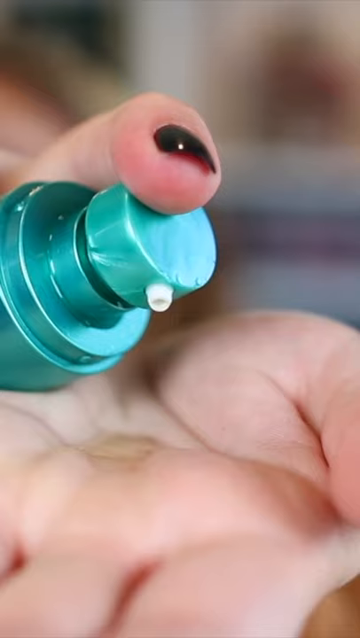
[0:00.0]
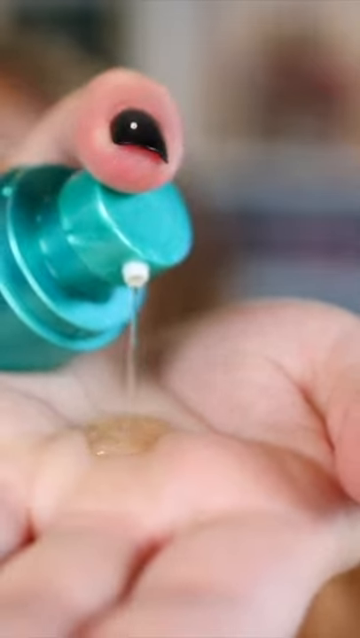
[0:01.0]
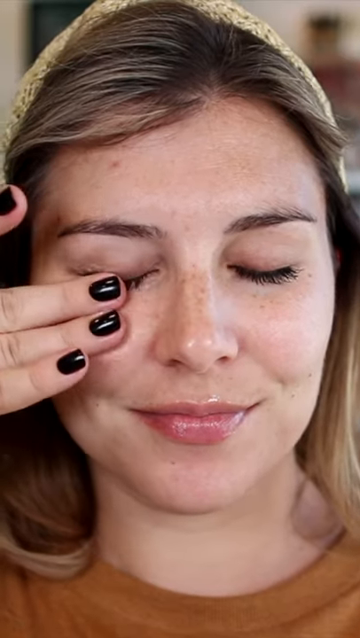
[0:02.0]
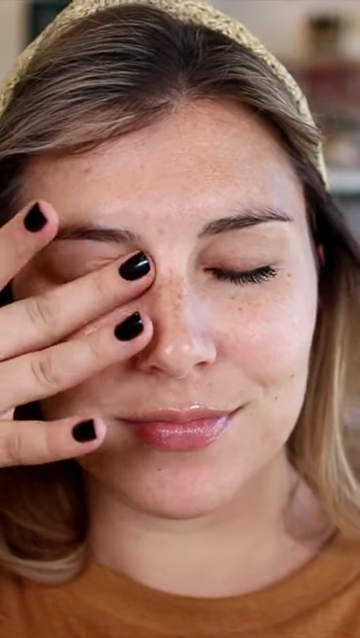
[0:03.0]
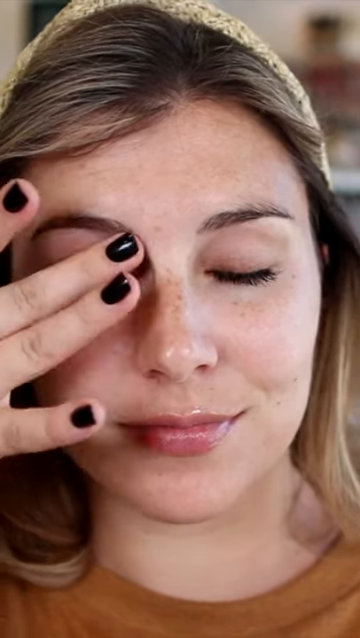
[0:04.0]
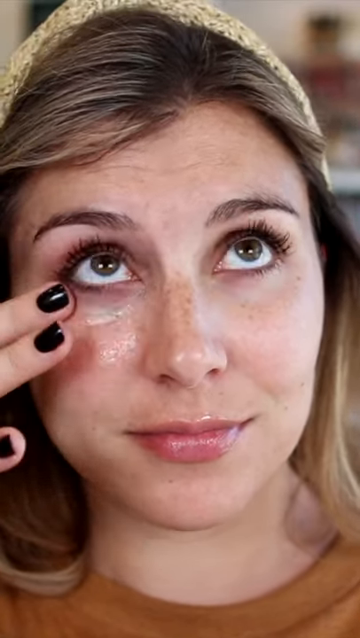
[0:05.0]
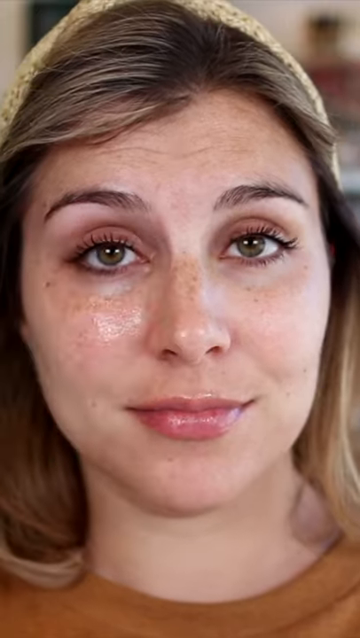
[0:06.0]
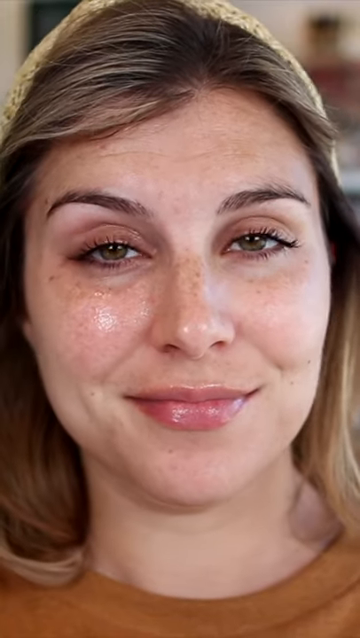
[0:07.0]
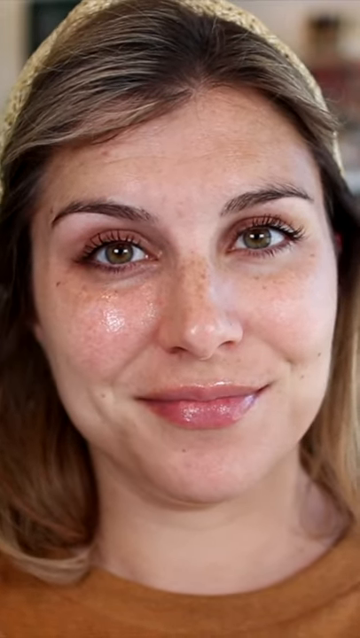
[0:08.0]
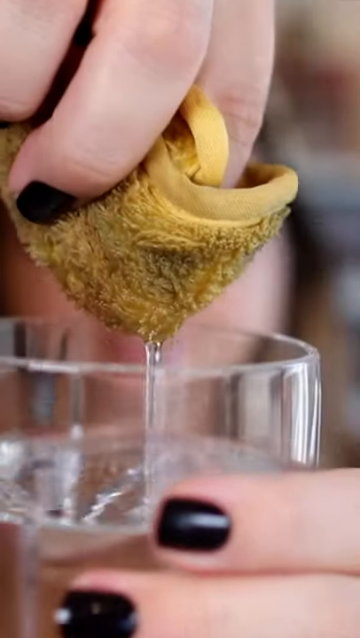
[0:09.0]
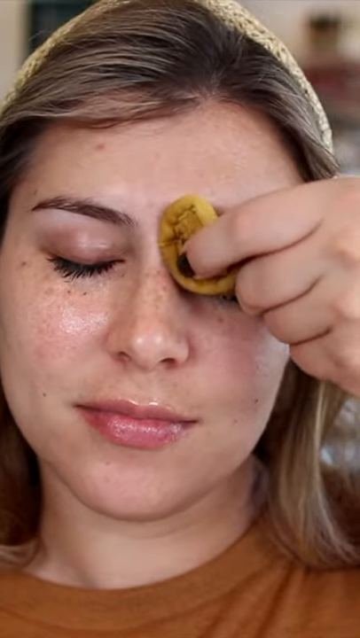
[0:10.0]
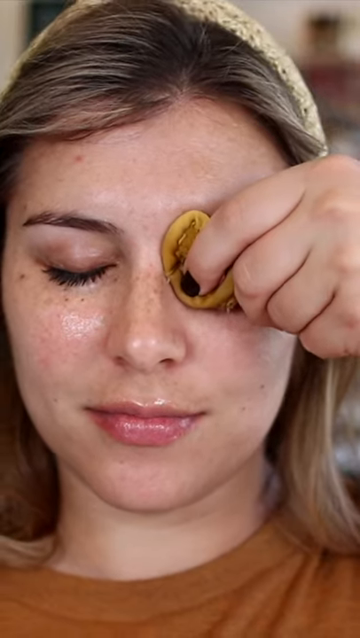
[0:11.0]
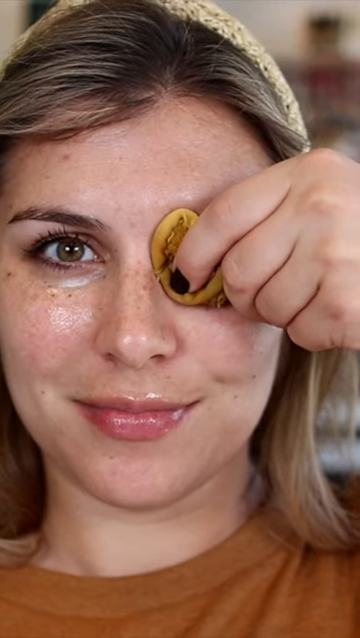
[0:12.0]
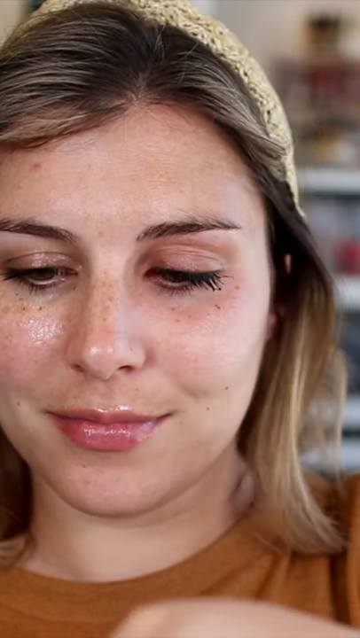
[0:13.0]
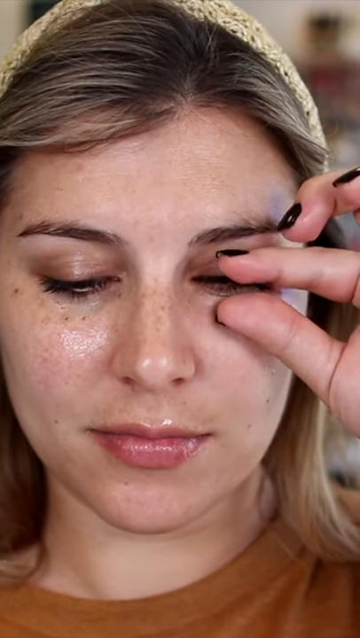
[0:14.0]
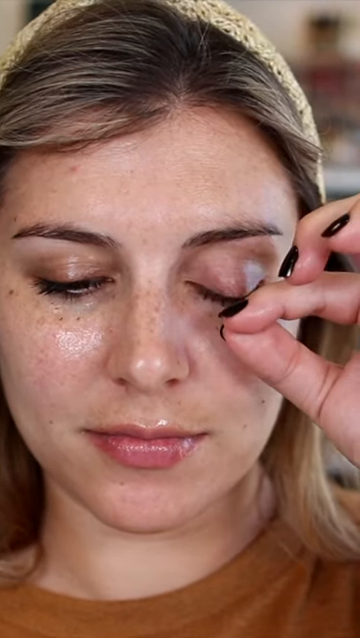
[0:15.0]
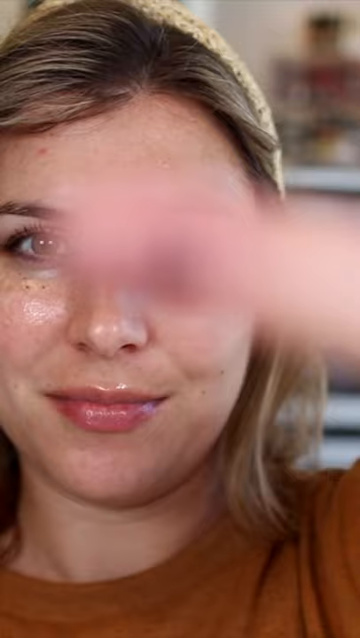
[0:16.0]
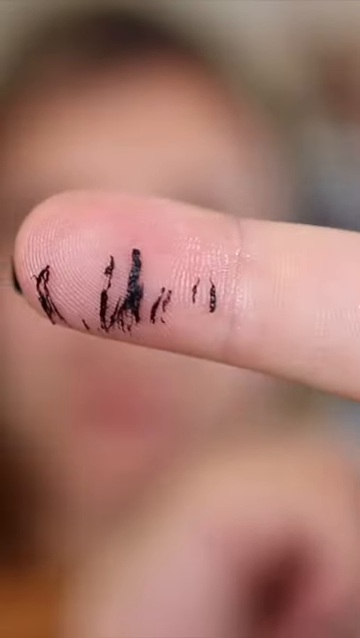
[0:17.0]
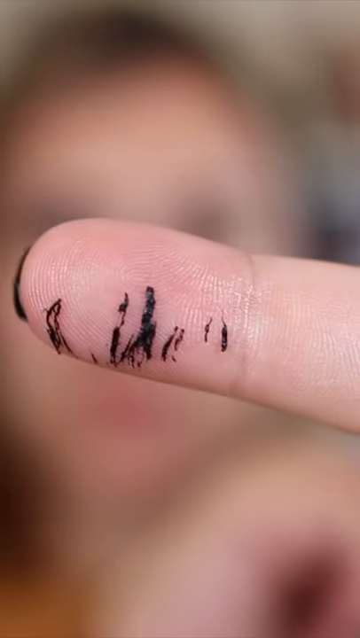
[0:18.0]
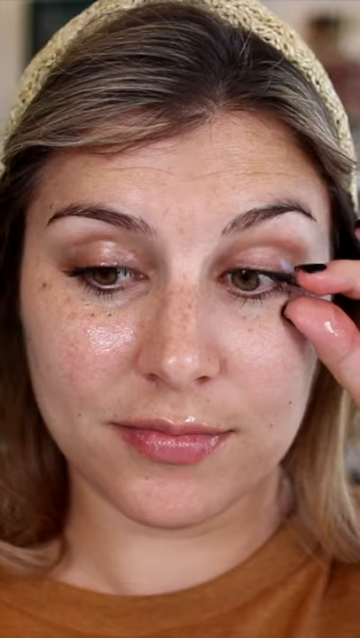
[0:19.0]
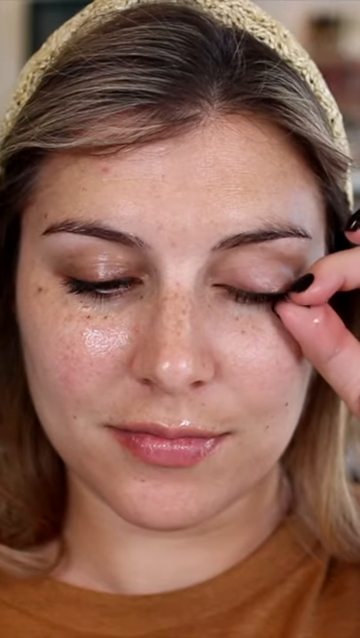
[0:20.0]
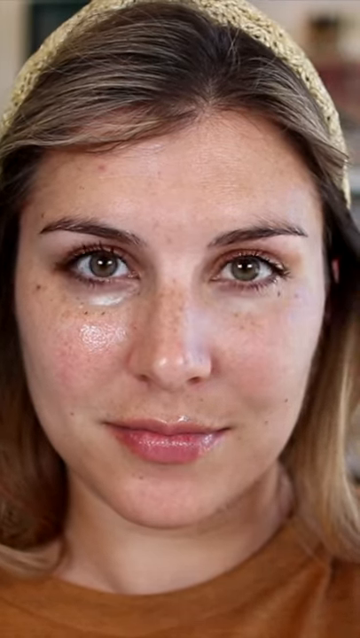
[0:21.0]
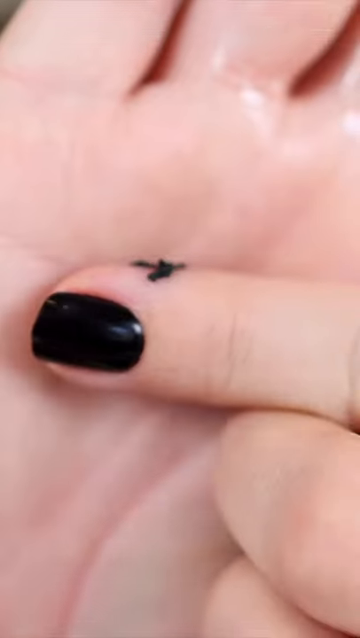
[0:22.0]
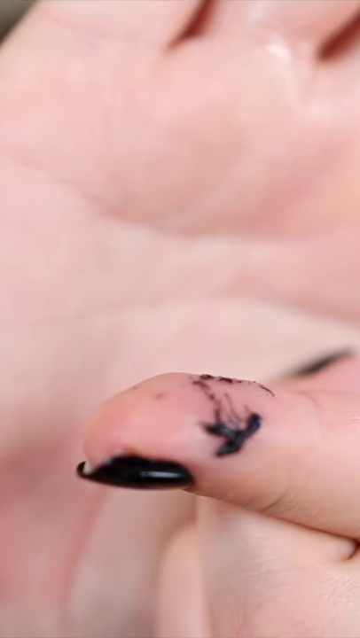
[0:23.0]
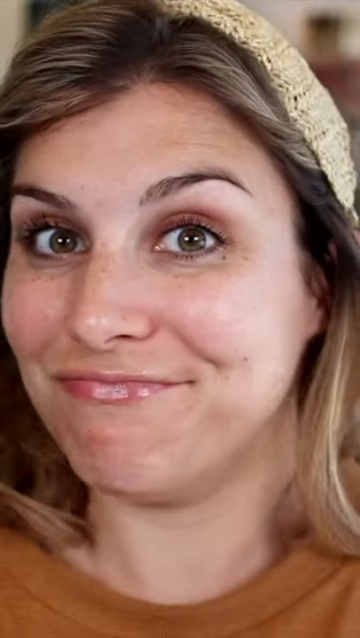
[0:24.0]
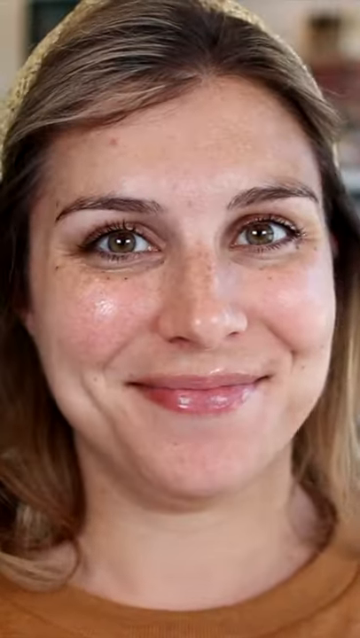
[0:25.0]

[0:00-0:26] A close-up shows a hand as a clear product is pumped from a green tube into it. A woman with kind of dark blonde hair then applies the product around and underneath her eye area. She is smiling slightly, without showing her teeth, and only her face is seen up close. She dips a washcloth in water and holds it over her left eye, apparently using it to remove mascara. She then takes the washcloth away from her eye and runs her thumb and index fingertip over her eyelashes, and a close-up shows her index finger with black lash marks or mascara marks on it. The product appears to be designed to remove eye makeup gently, using just the cloth and some water, with the mascara coming right off.